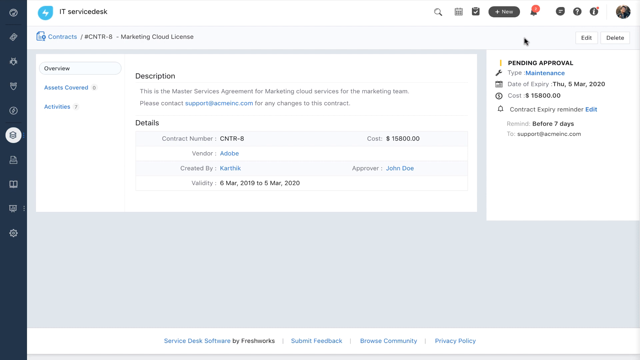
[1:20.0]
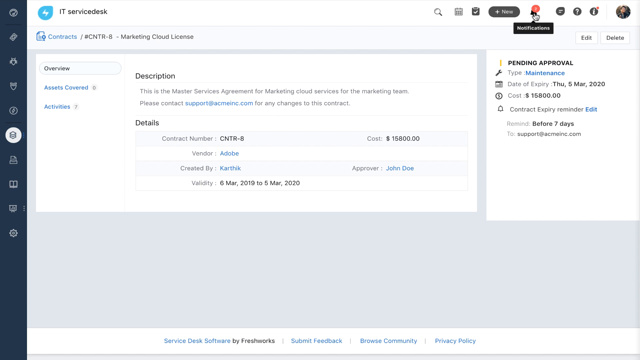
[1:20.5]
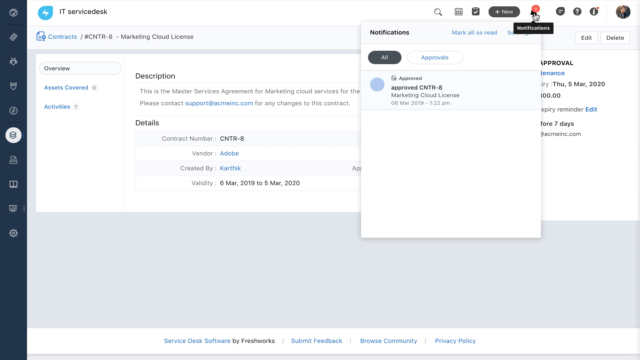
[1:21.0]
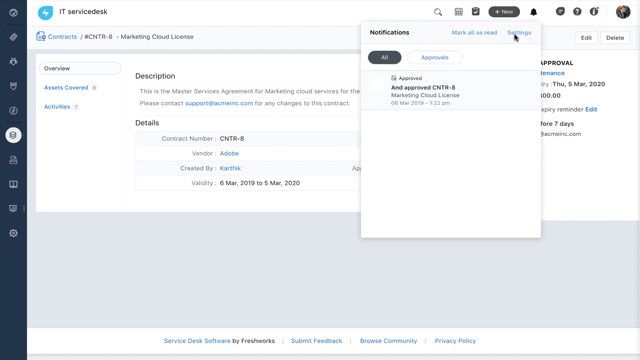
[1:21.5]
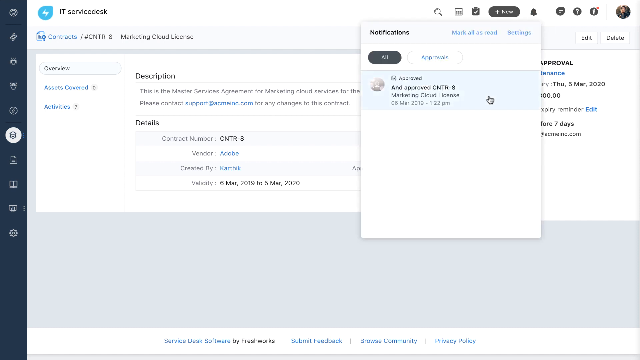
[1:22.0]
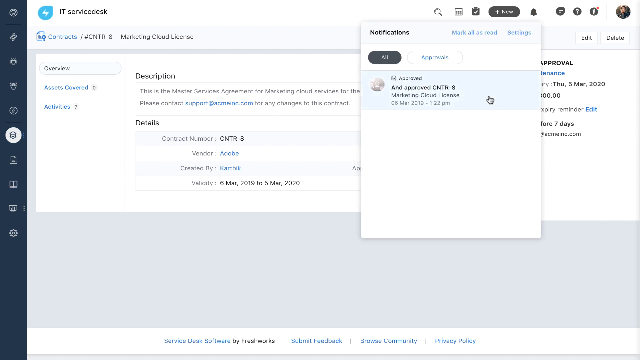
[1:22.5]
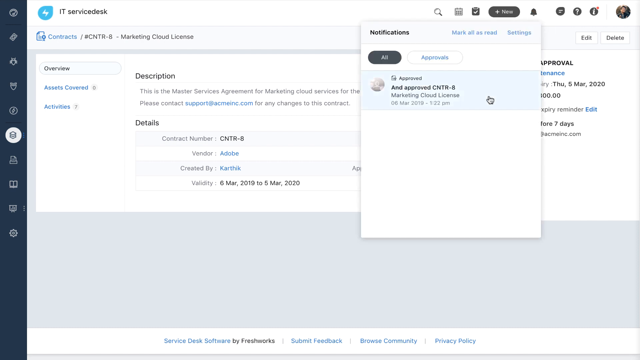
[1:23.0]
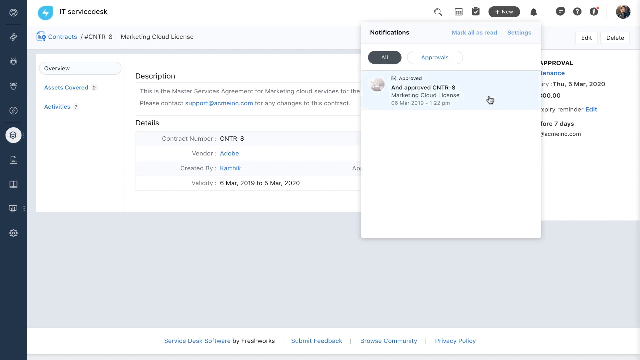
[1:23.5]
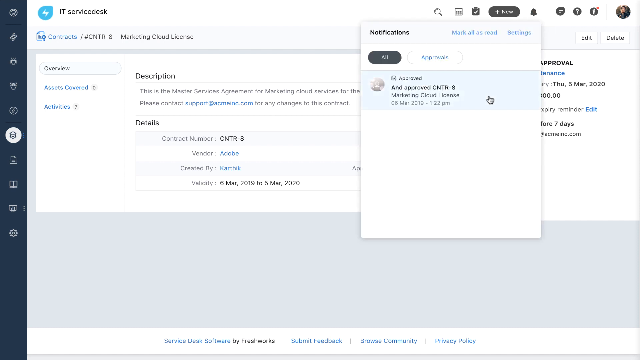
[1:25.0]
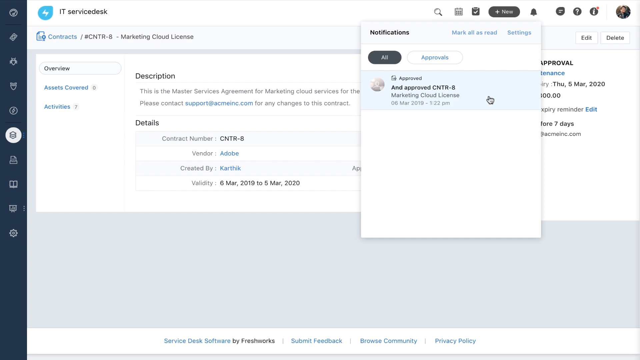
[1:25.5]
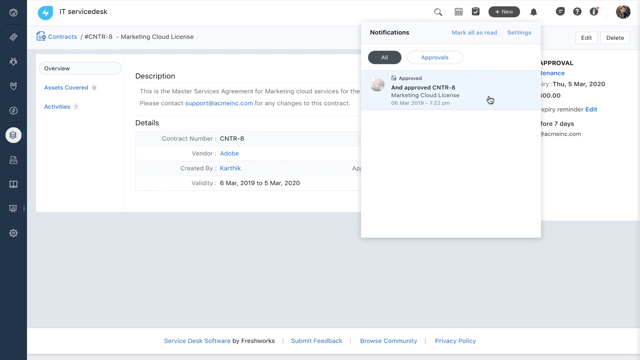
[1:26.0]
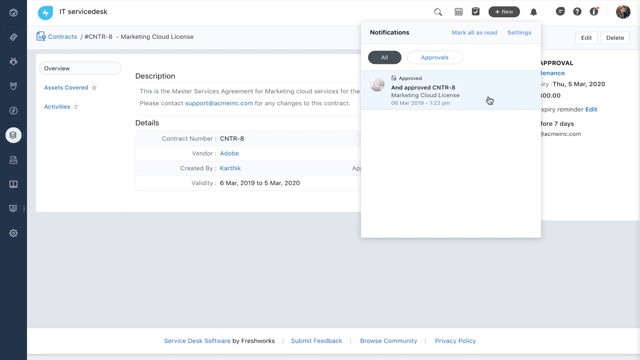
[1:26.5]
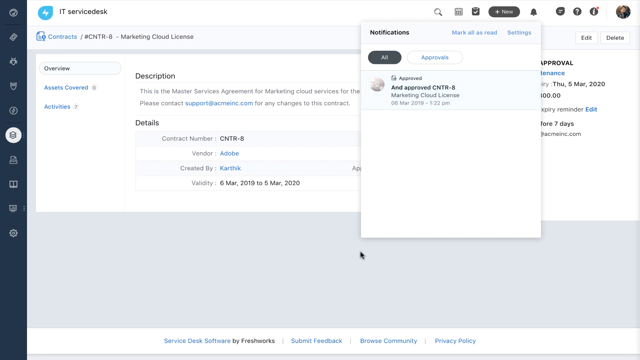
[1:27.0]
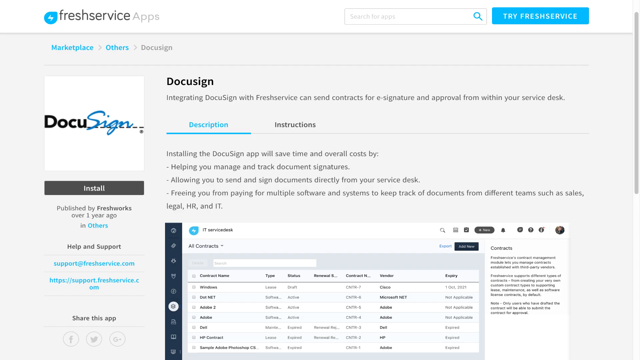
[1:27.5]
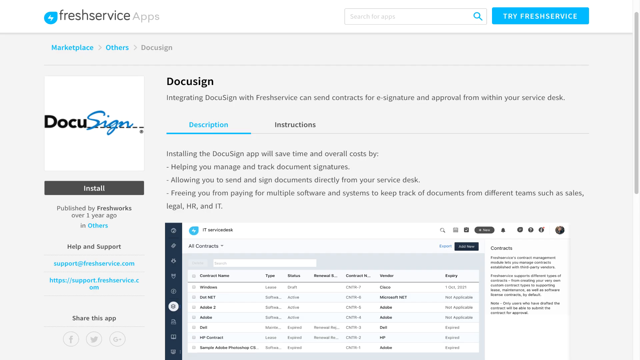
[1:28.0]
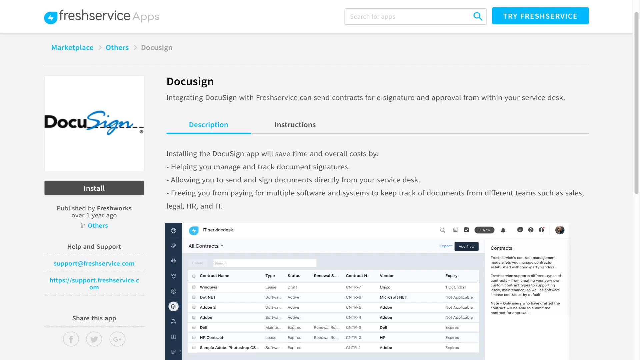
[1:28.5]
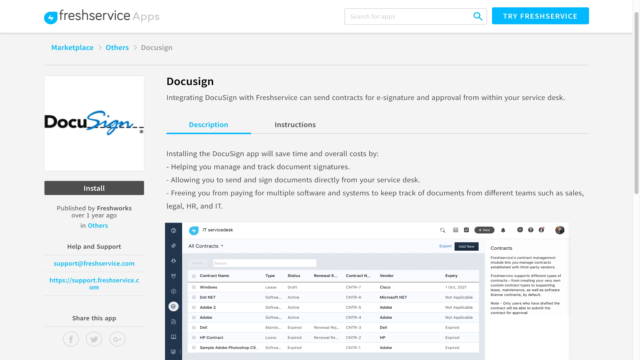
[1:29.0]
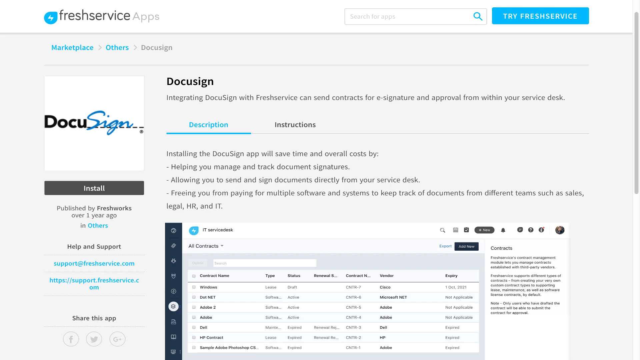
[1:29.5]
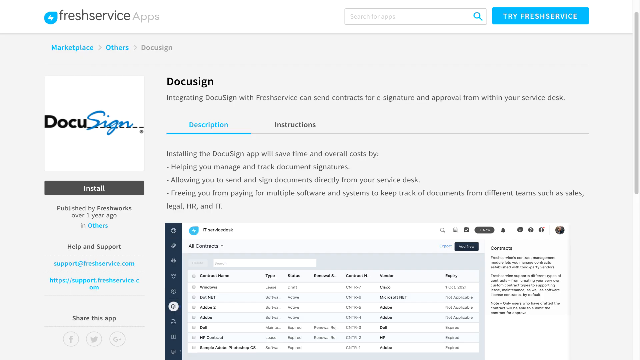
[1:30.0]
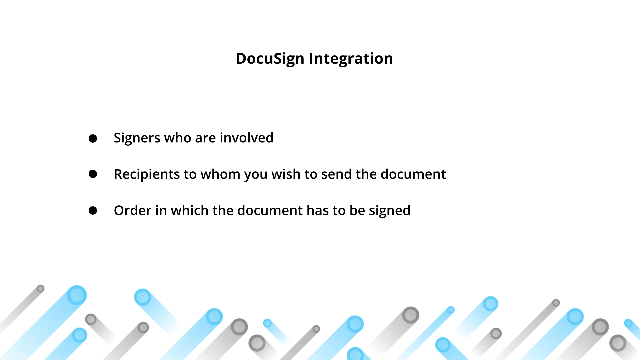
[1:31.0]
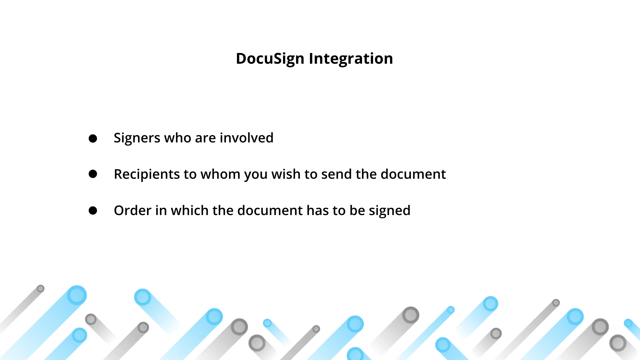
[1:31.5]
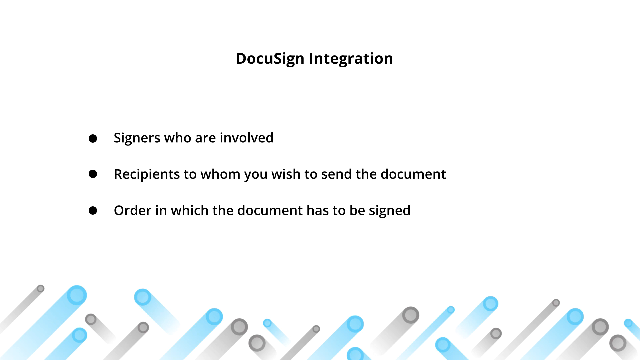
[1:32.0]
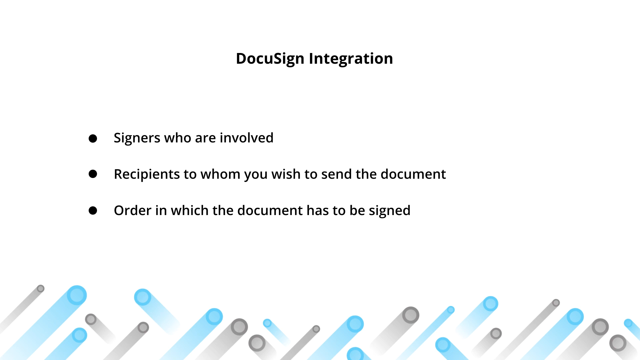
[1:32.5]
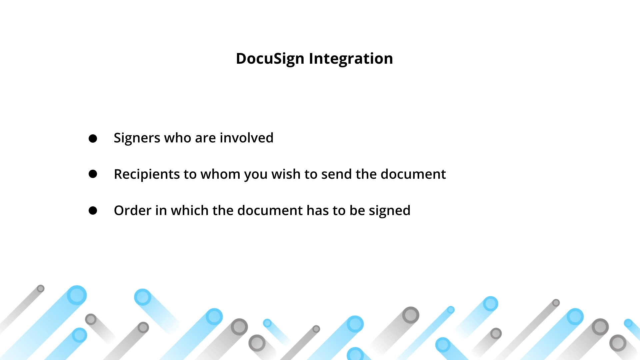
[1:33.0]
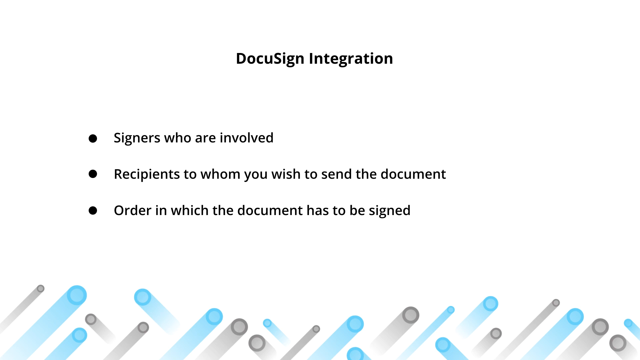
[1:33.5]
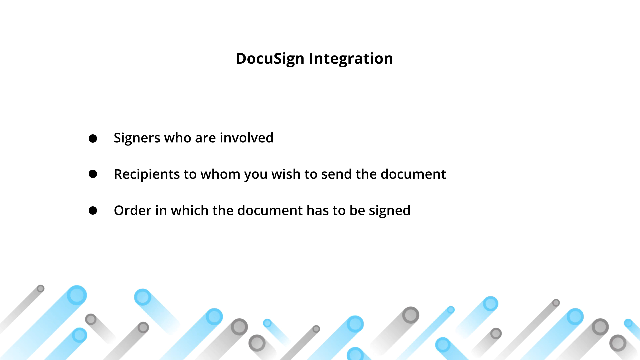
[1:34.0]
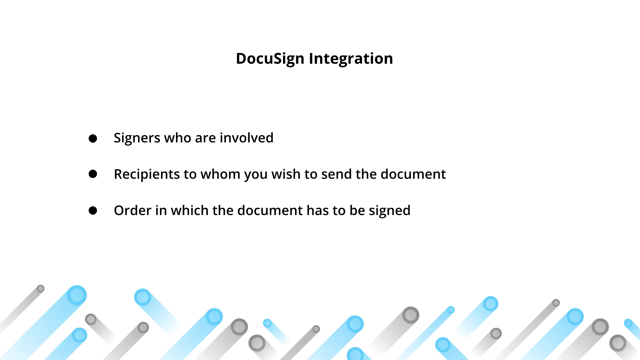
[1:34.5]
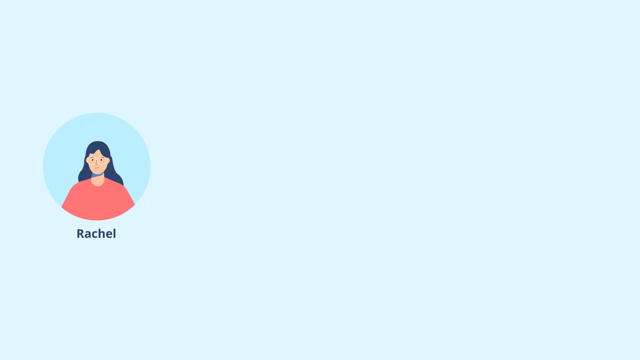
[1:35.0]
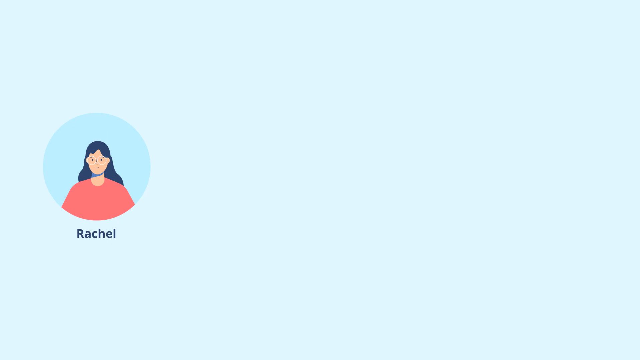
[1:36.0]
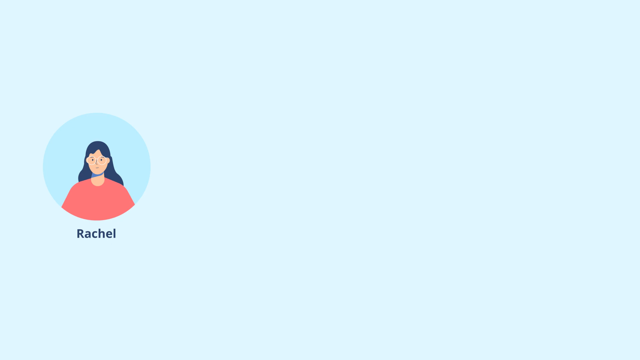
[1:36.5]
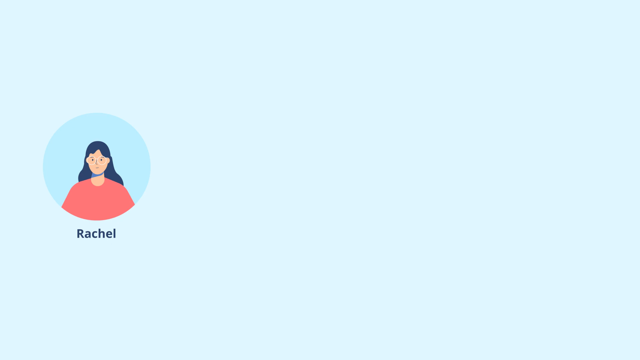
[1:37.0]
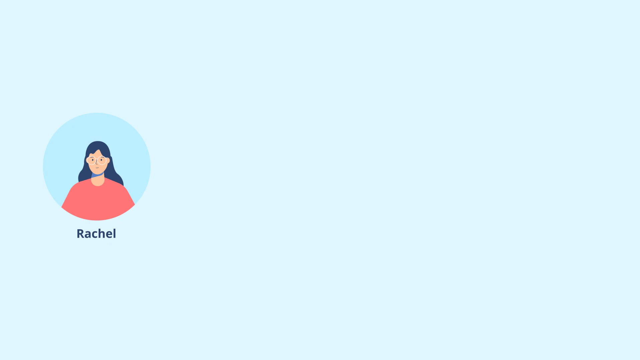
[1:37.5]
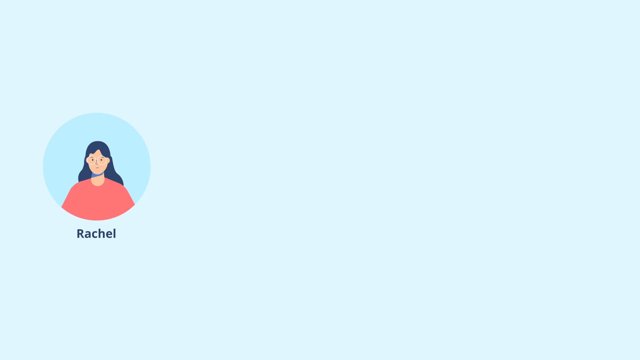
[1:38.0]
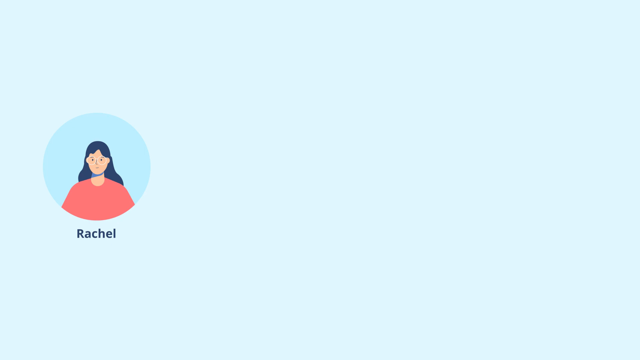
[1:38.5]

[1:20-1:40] The user has clicked through to the contract, contract number eight, whose description reads "this is the master service agreement for marketing cloud service for the marketing team." The user moves the cursor to the top right and clicks the notification icon, which shows one notification for contract number eight, marked "approved." The user hovers over that contract, and then a different page appears, reached through Markets page, Others, DocuSign. The DocuSign page reads "integrating DocuSign with Fresh Service can send contracts for e-signature and approval from within your service desk." A description and instructions follow for the integration: "one, signers who are involved, two, recipients to whom you wish to send the document, three, order in which the document has to be signed." An animated female figure then appears, with the name Rachel written at the bottom.